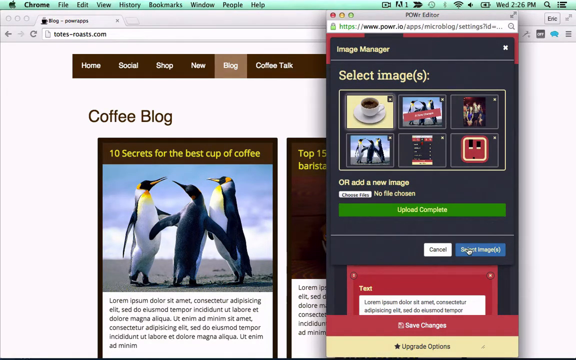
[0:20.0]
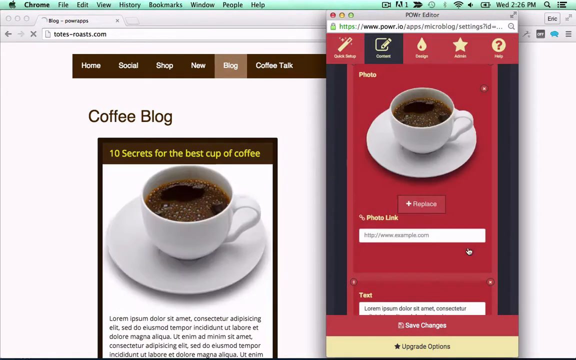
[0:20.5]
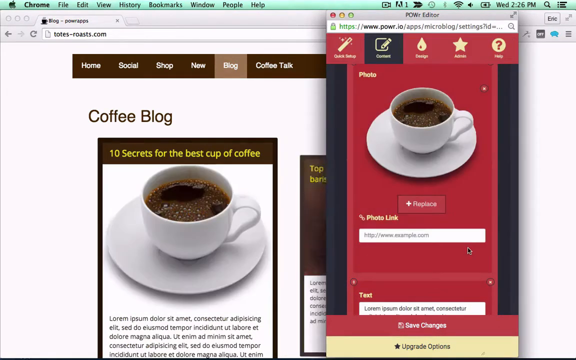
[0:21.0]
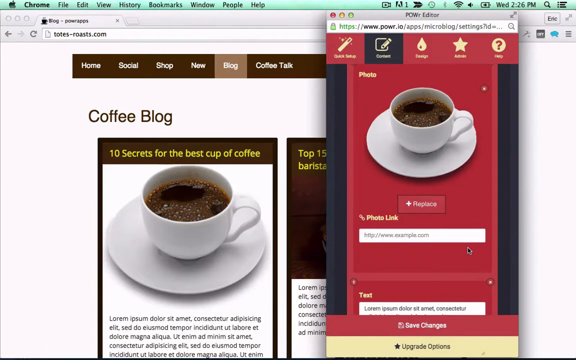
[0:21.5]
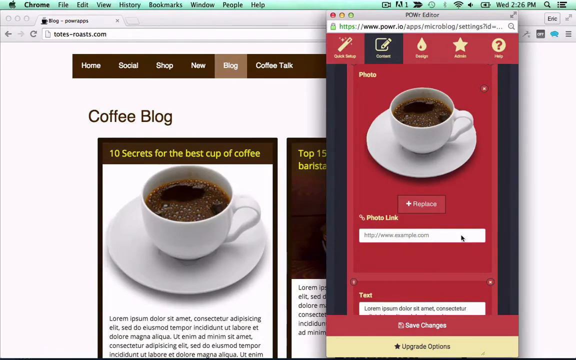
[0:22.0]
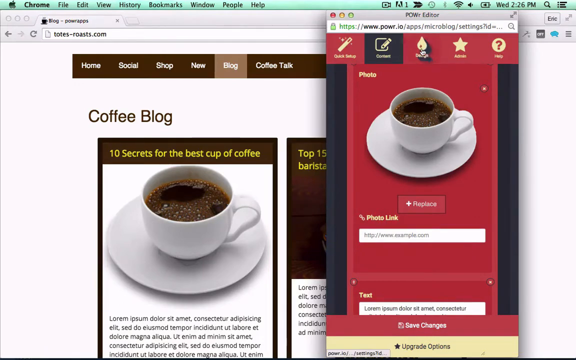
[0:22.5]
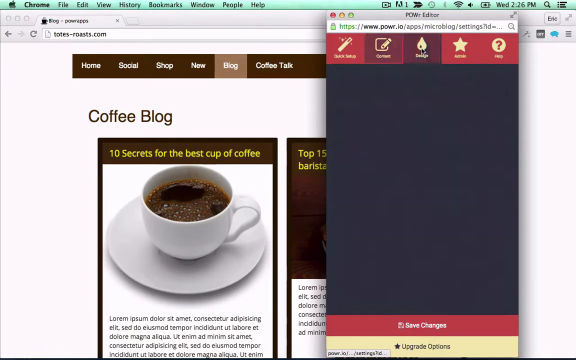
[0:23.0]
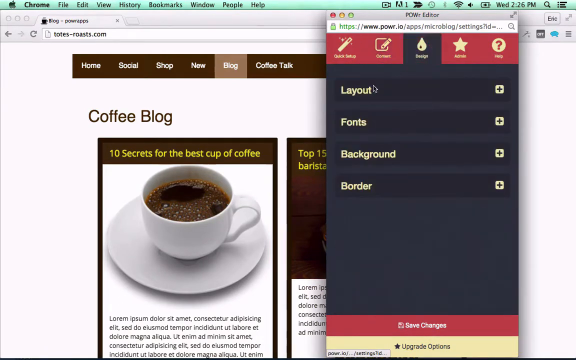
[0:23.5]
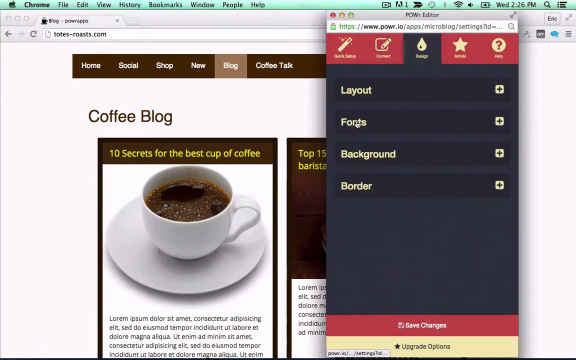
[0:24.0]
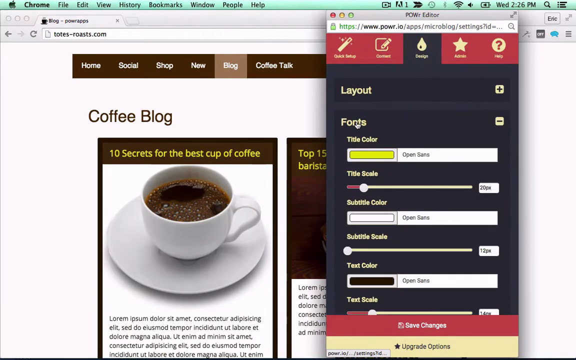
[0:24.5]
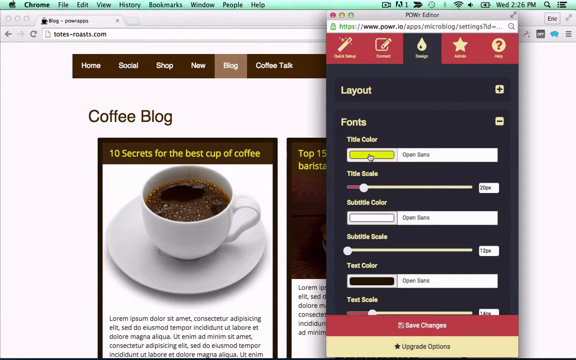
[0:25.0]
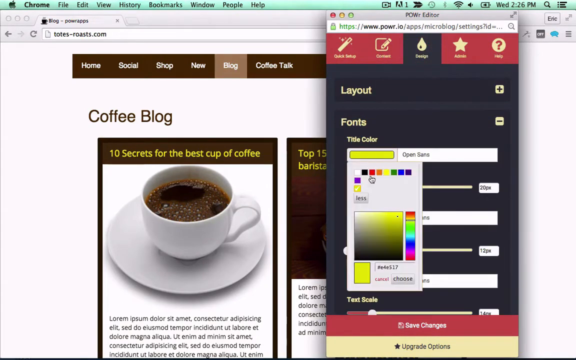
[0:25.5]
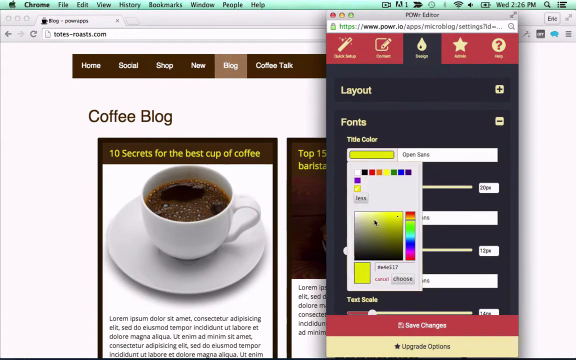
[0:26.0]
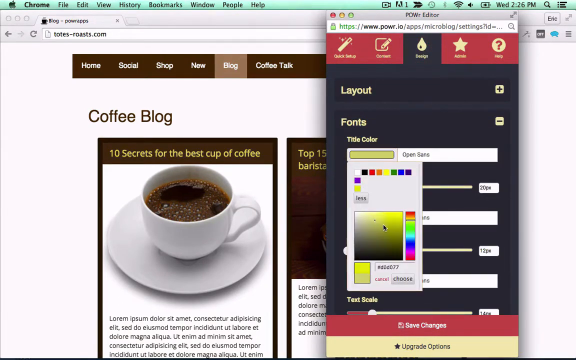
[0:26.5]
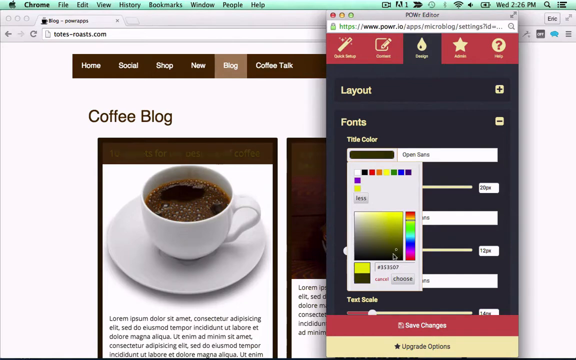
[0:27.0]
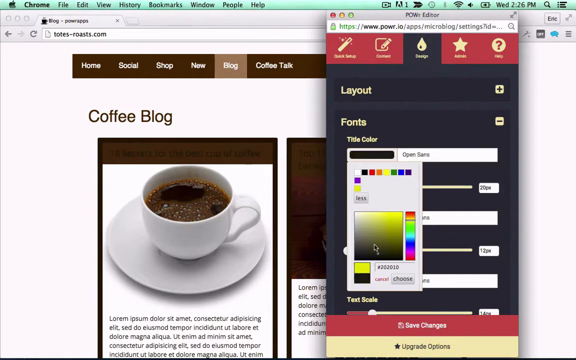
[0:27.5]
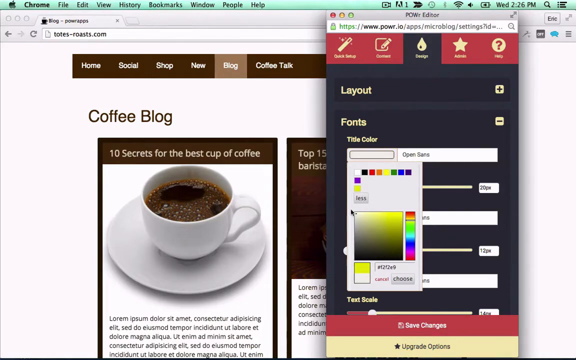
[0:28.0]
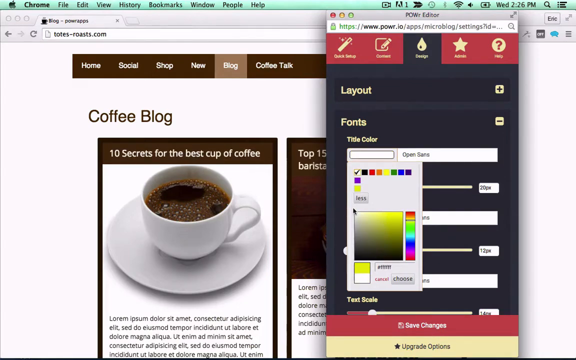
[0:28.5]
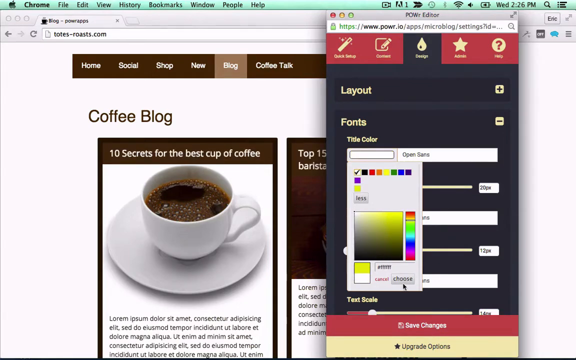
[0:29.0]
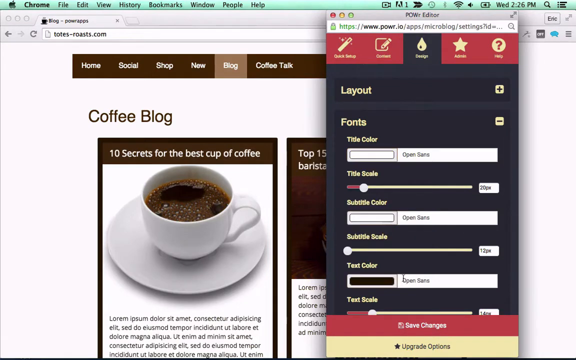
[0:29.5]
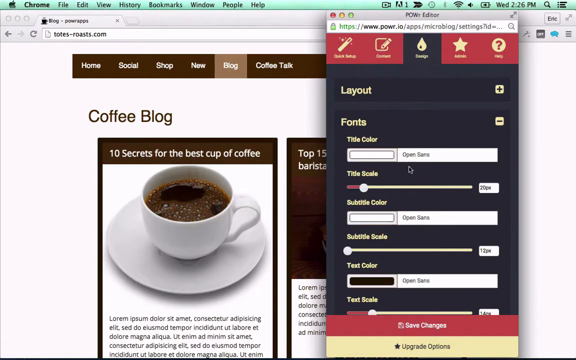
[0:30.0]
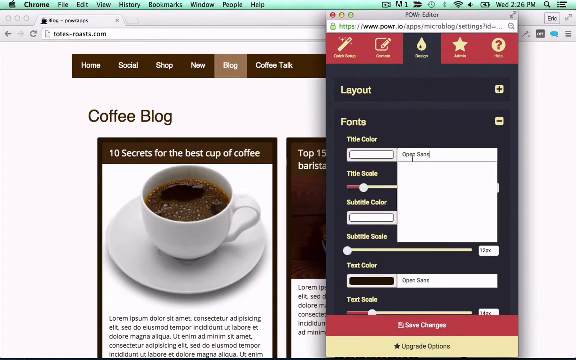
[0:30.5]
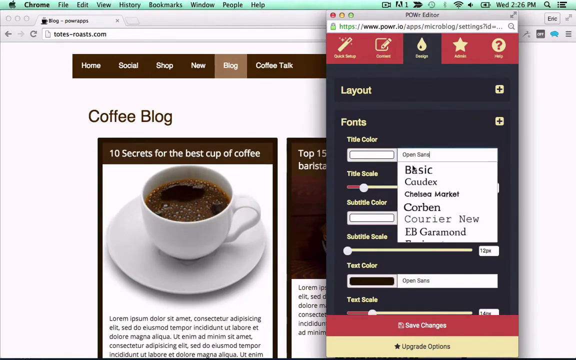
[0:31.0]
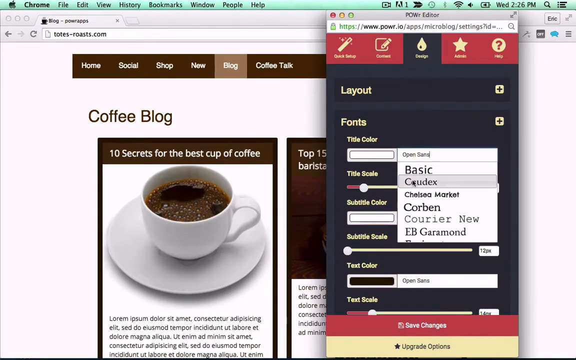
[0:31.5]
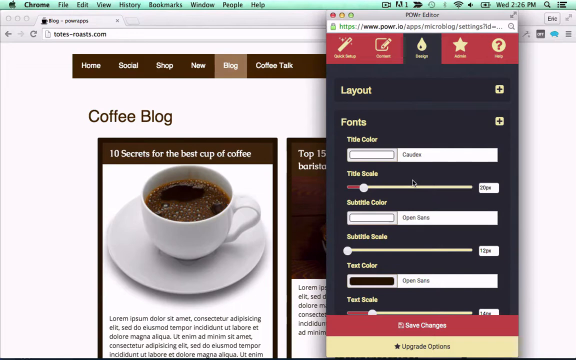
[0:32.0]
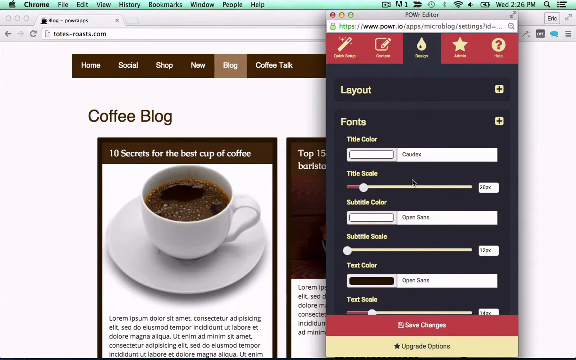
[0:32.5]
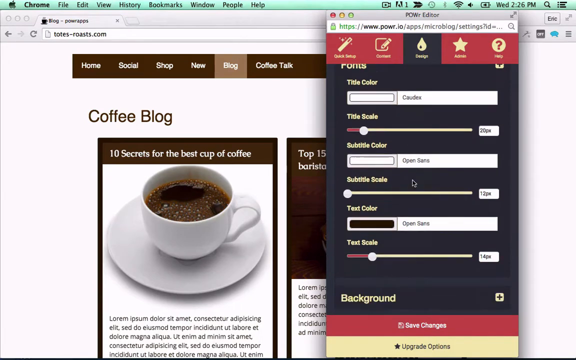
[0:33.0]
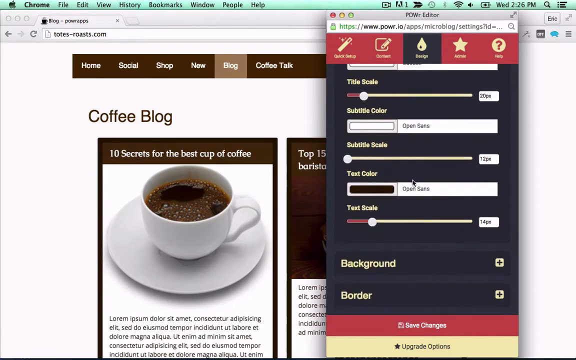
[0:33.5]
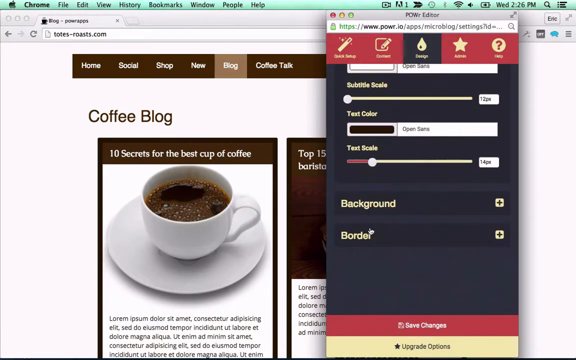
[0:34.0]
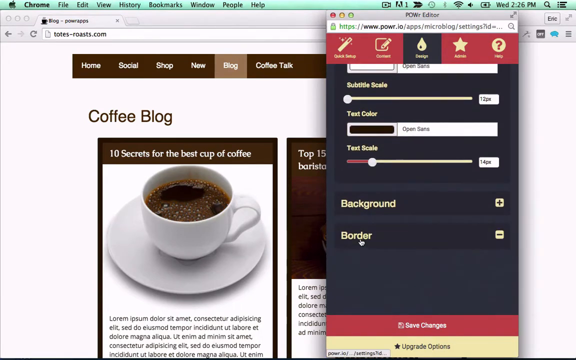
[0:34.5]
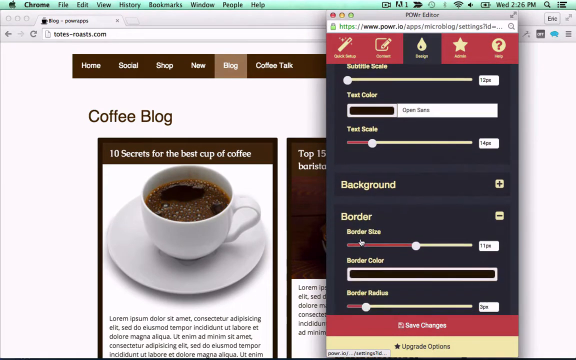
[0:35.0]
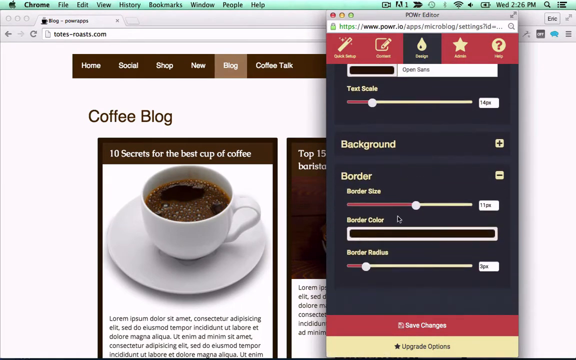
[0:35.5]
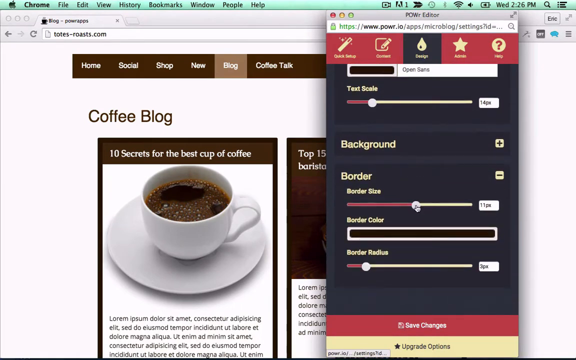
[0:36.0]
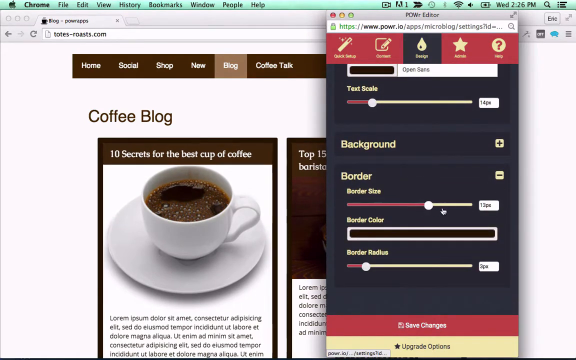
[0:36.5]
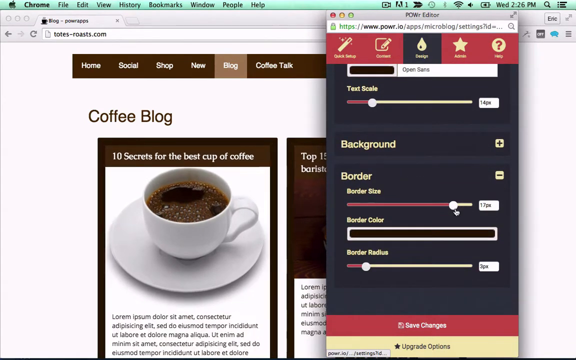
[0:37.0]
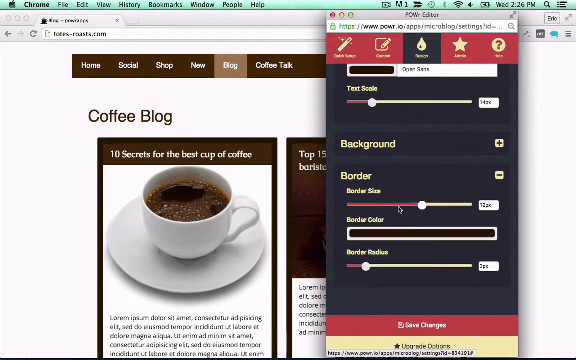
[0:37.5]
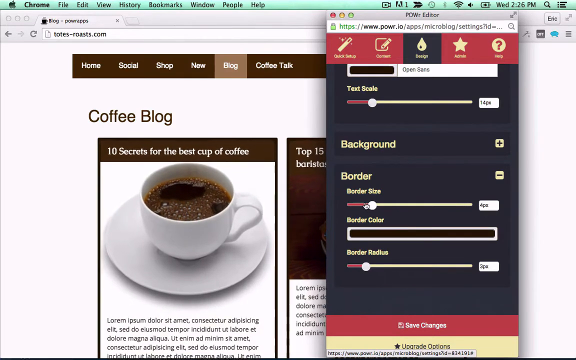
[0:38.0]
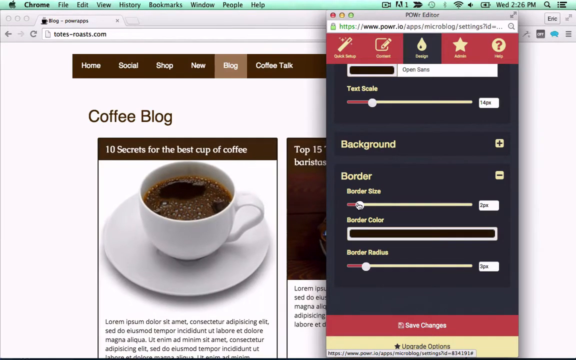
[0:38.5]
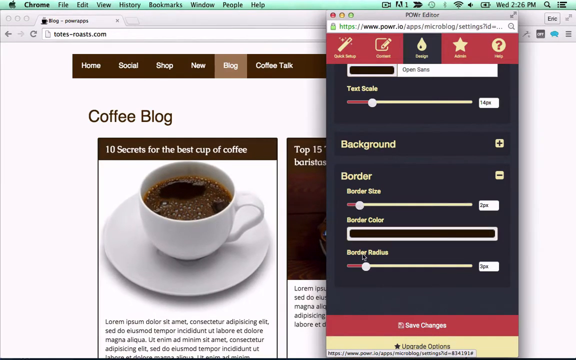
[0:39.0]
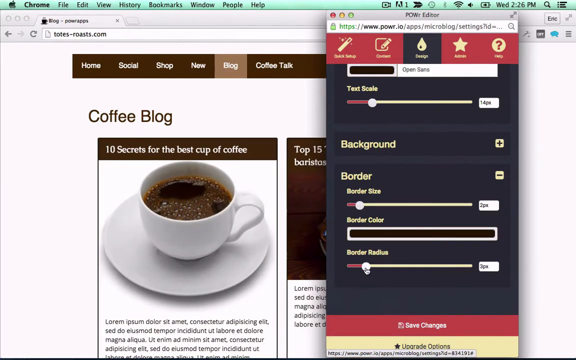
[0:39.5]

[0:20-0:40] The person adds a cup of coffee to the blog, so it reads "10 secrets of the best cup of coffee", with text in a different language below. They change the title color from yellow to white, then change the font from Basic Sans to Cordeaux. They change the border from medium thickness to the lowest thickness and the border radius from a lower setting to the highest. All of this happens in the editor tab, open separately on the right-hand side, while the blog is visible on the webpage on the left, where the edits appear in real time. The webpage's theme colour appears to be brown: the title bar at the top is a brown shade with Home, Social, Shop, New and Blog on it, and the articles below have brown backgrounds.